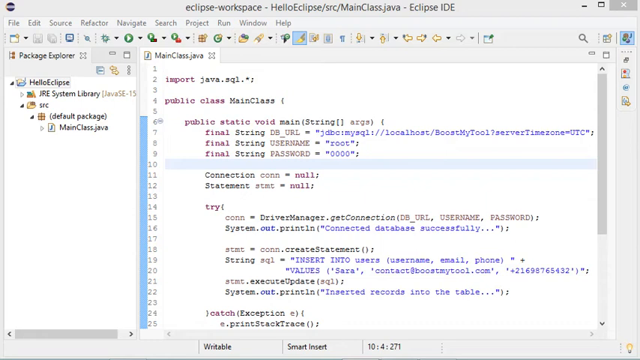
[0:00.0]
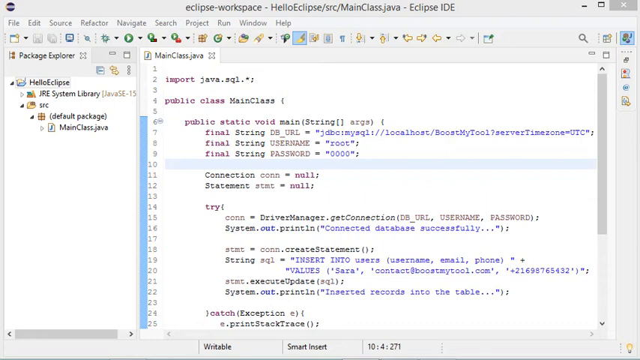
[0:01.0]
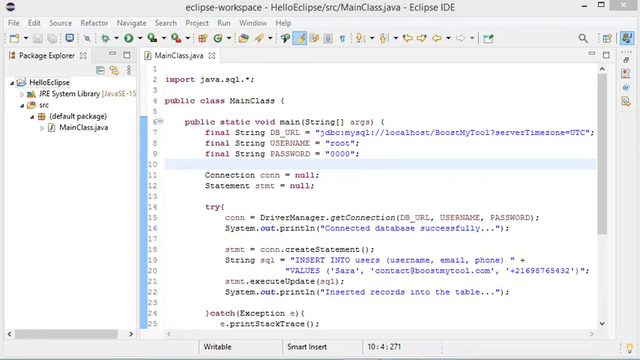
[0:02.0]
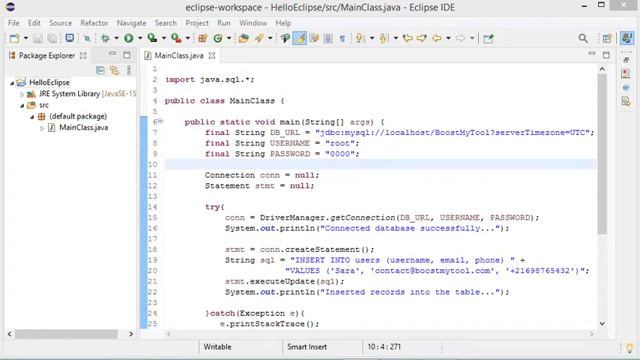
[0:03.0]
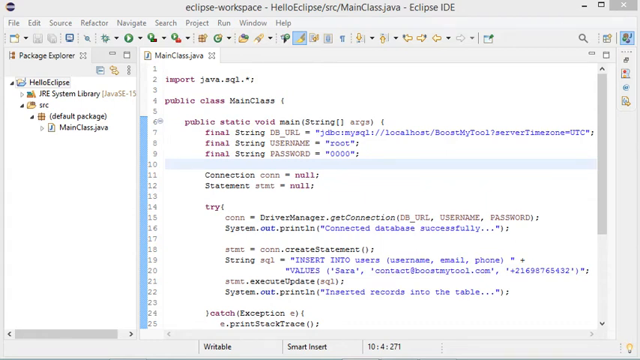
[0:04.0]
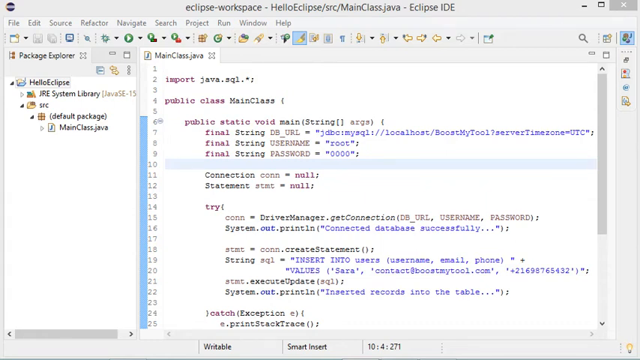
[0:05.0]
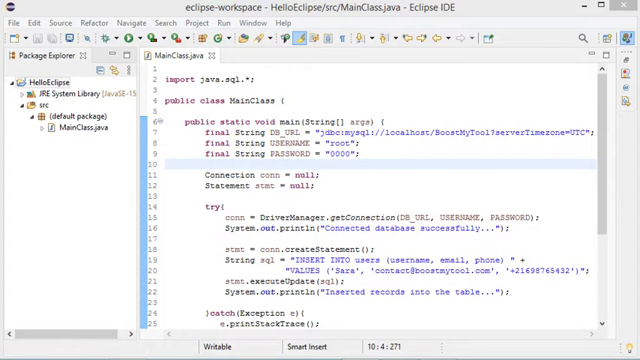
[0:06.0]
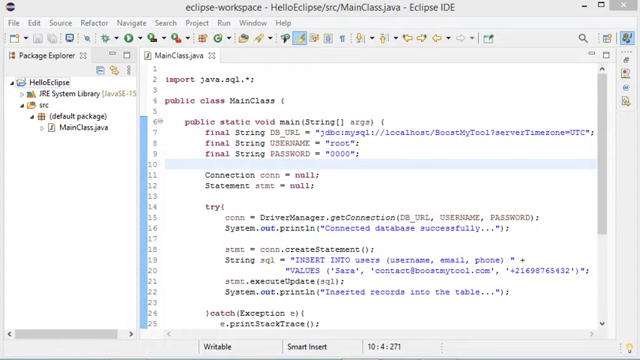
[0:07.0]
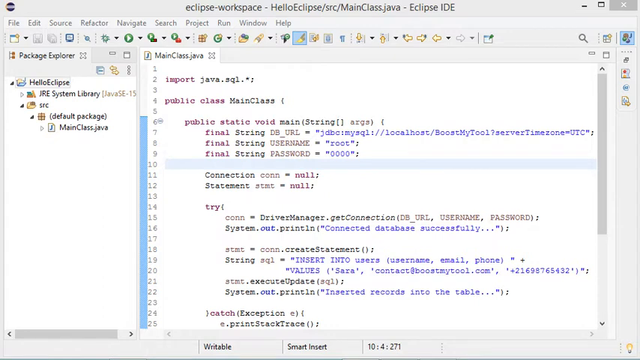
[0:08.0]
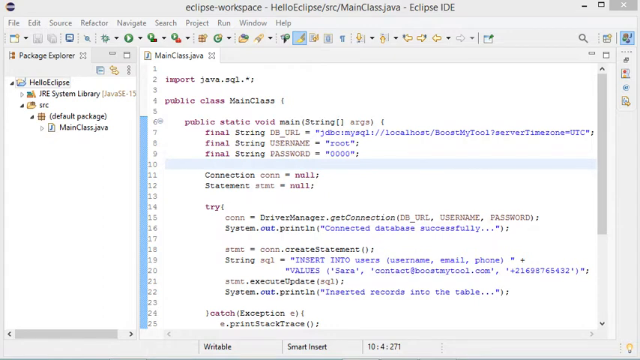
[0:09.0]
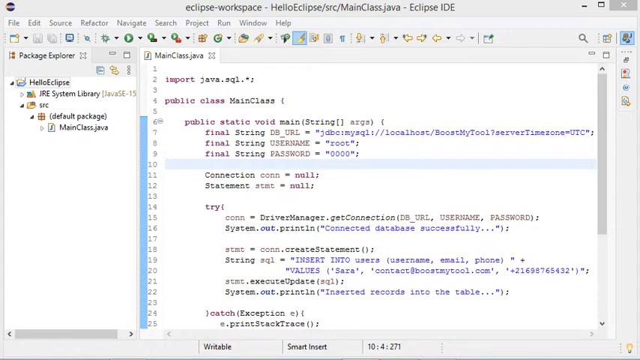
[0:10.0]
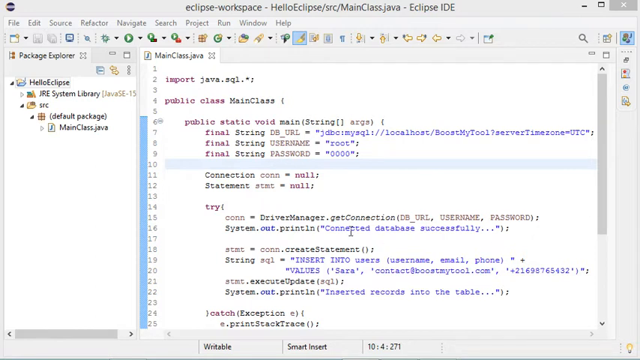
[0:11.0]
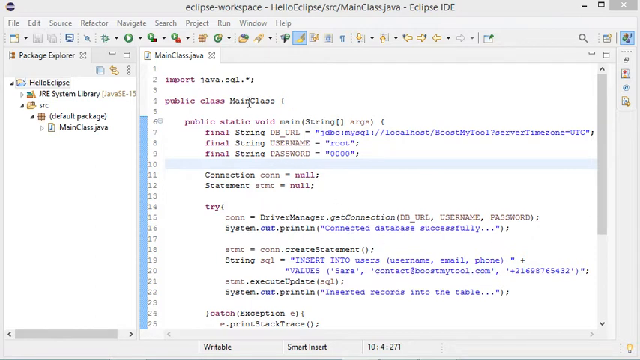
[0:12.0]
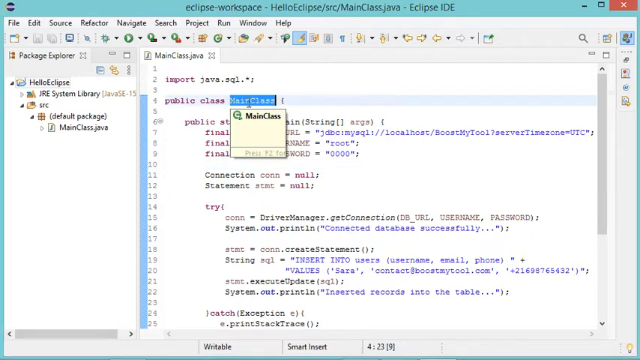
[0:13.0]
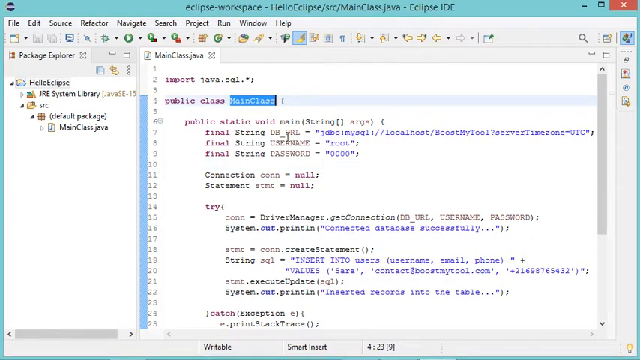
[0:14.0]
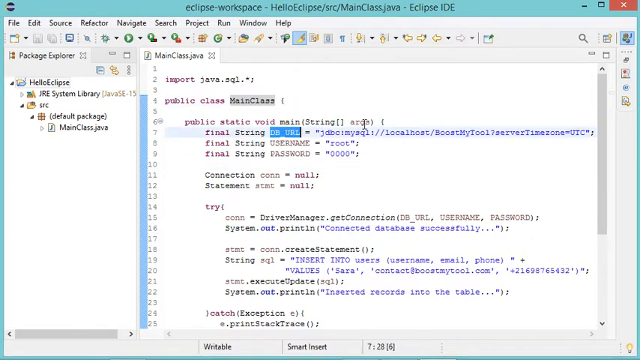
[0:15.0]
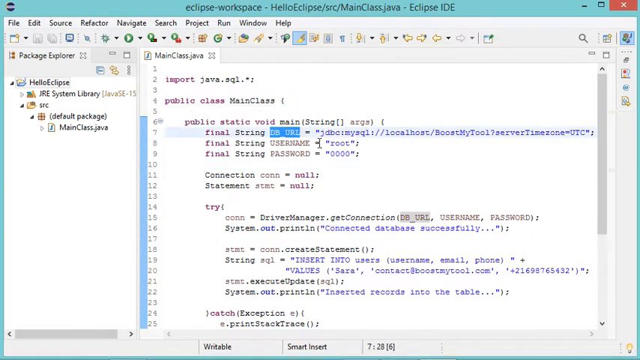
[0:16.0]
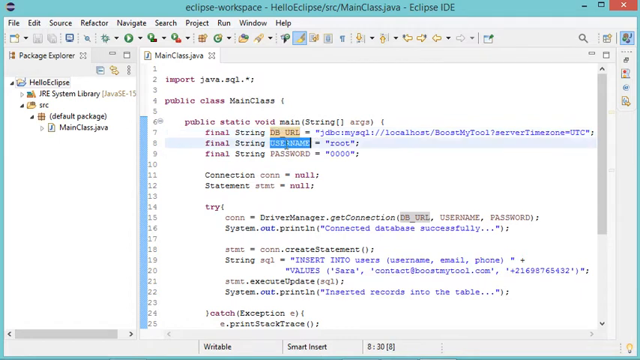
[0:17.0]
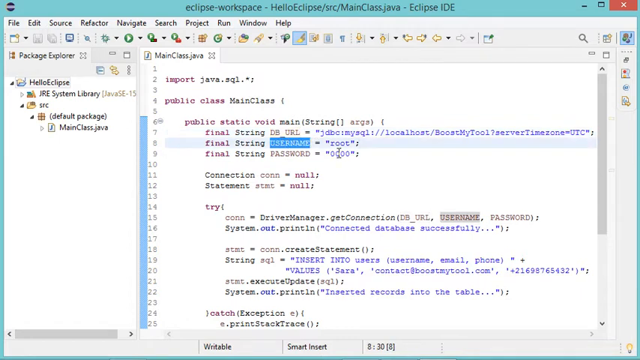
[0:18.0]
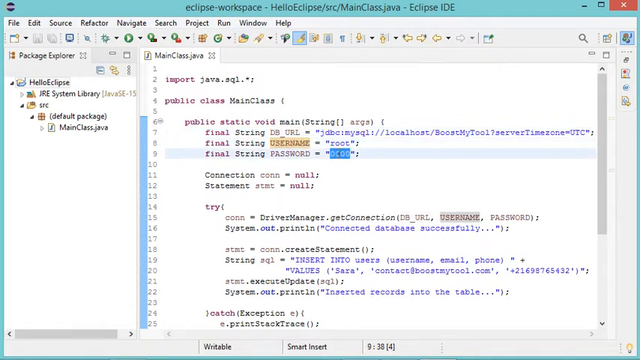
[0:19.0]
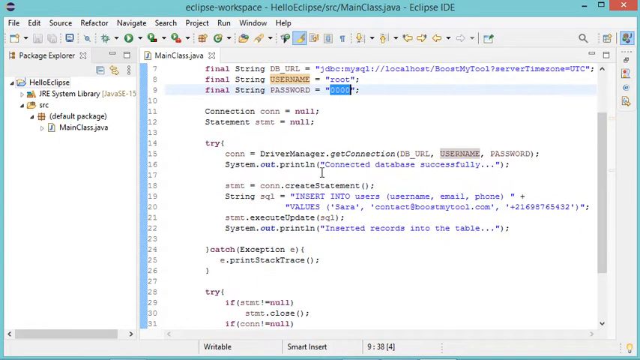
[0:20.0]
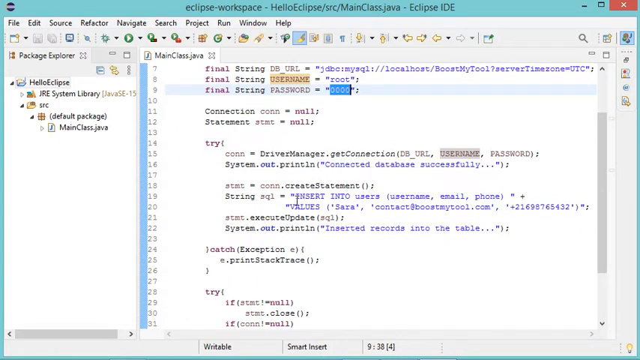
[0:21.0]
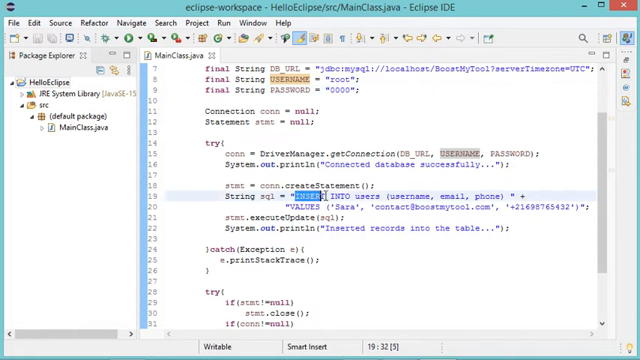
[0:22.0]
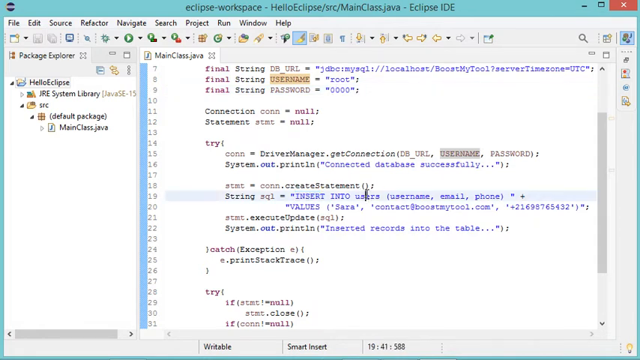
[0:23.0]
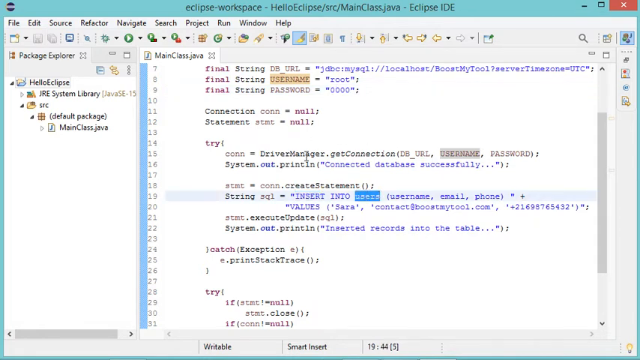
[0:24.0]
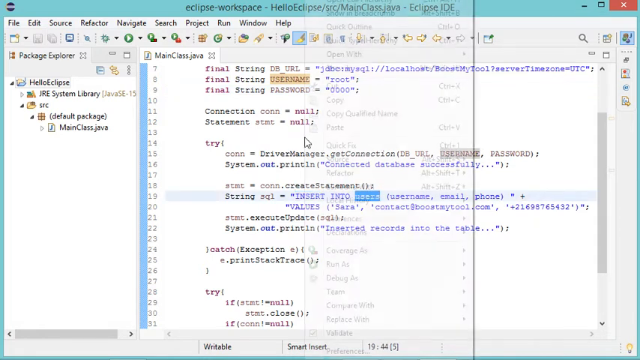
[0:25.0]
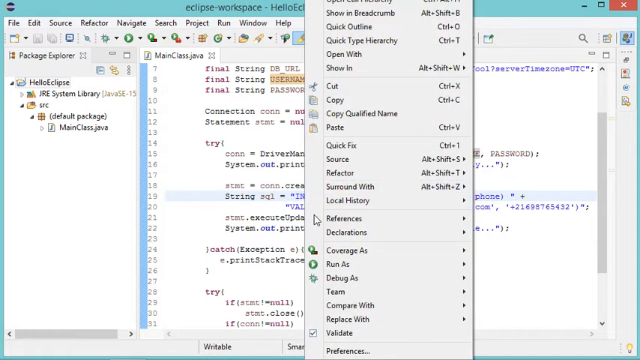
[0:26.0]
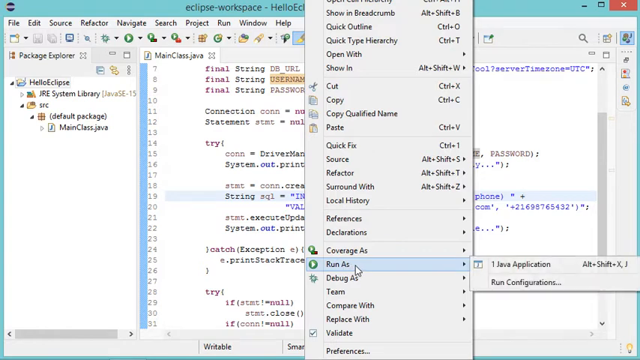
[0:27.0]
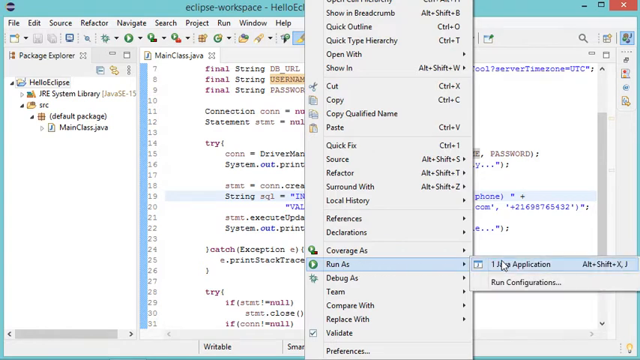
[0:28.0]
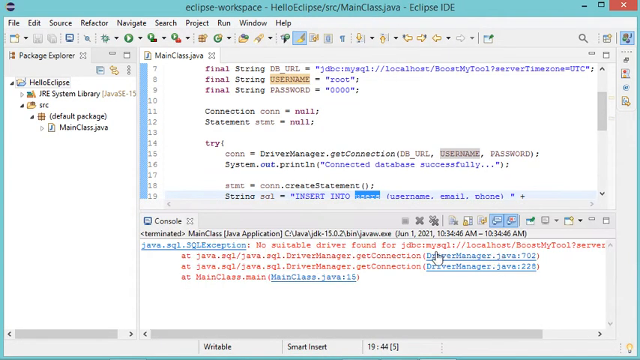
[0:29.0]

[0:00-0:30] A workspace is titled "Eclipse Workspace", with "Hello Eclipse", "SRC", "main class.java" and "Eclipse IDE" shown, and some JavaScript code is on screen under the heading "main class.java". The code text includes "import java.sql.*", "public class main class", "public static void main string args", "final string db_url" set to a "jdbc mysql//local host/" address ending in "server time zone = utc", "final string username = root", "final string password" set to "00" in quotation marks, "connection con, null", "statement, stmt, null", "try", "con", "driver manager.get connection", "db url, username, password", "system out" and "connected database successfully...", along with other text. The workspace menu options are visible: file, edit, source, refactor, navigate, search, project, run, window and help. The package explorer lists Hello Eclipse, JRE system library, SRC, default package and main class java. Text at the bottom reads "writable" and "smart insert". A mouse pointer comes in and highlights text reading "main class", then clicks something open with a small green icon that says to press F2. The user highlights DB URL, then username, then "000", and then "insert" and "users". They open some settings, go to run as and "one Java application", and a console pops up with some text.